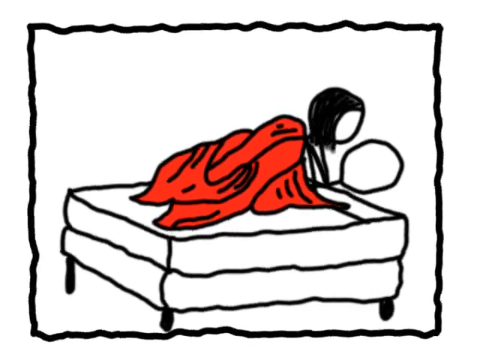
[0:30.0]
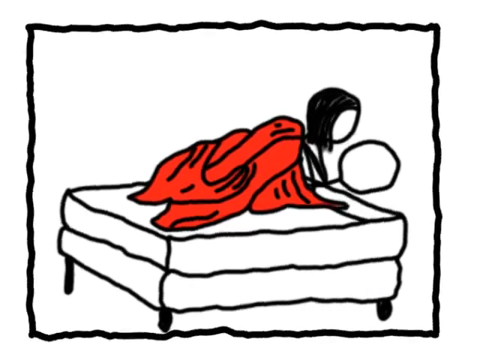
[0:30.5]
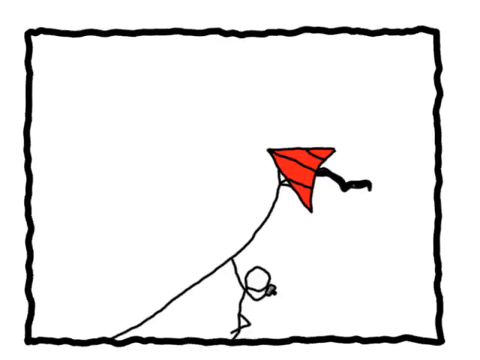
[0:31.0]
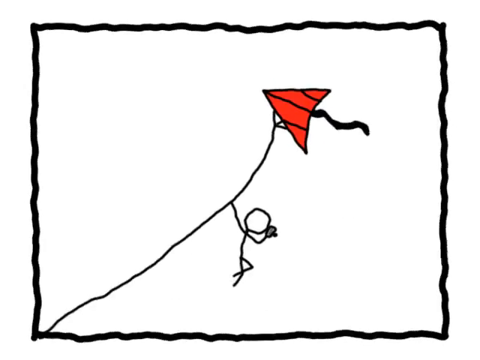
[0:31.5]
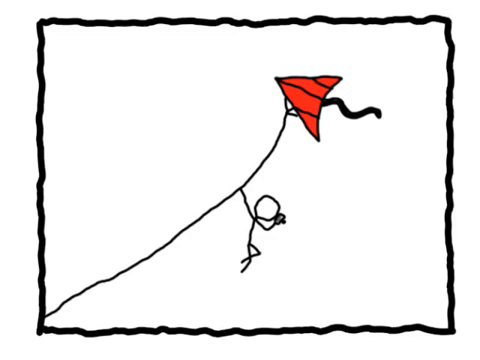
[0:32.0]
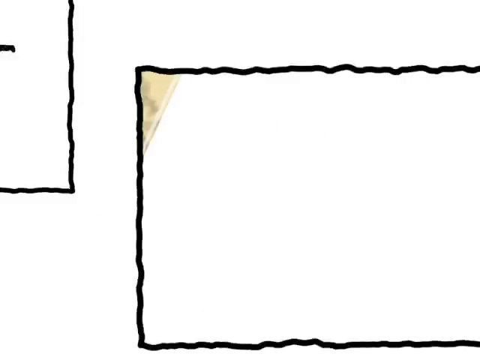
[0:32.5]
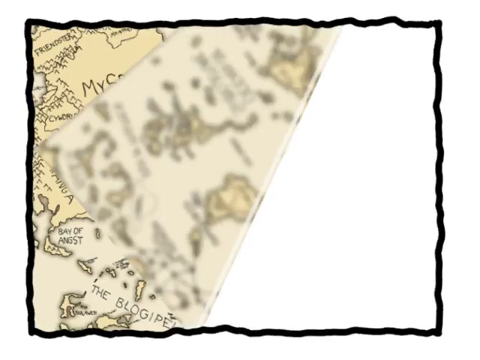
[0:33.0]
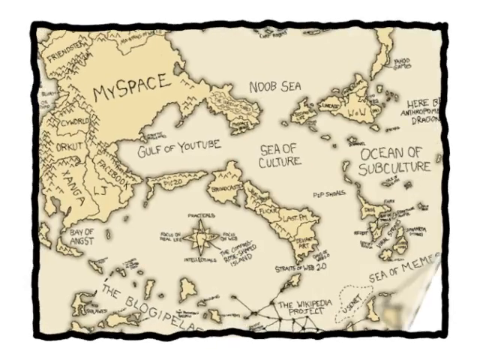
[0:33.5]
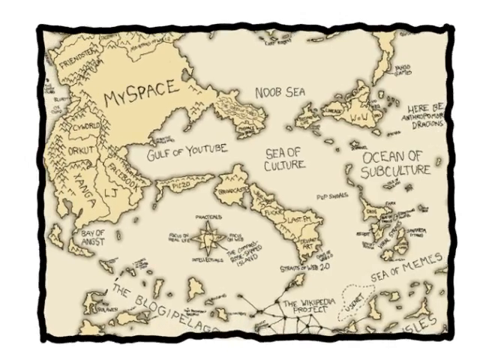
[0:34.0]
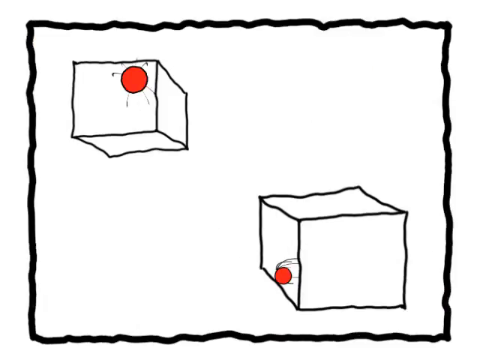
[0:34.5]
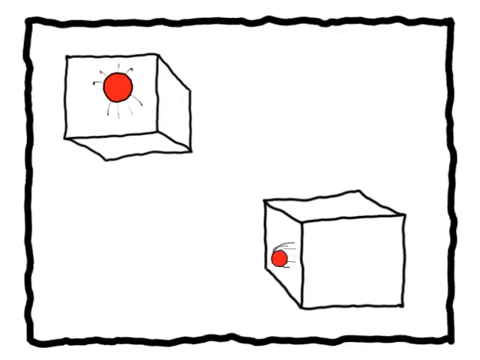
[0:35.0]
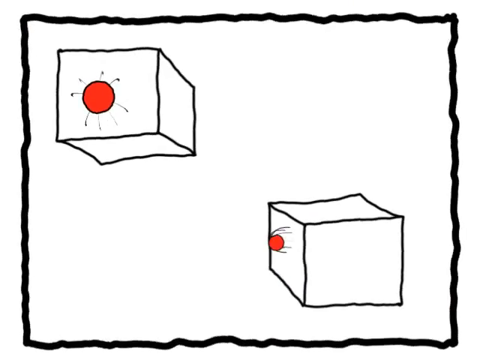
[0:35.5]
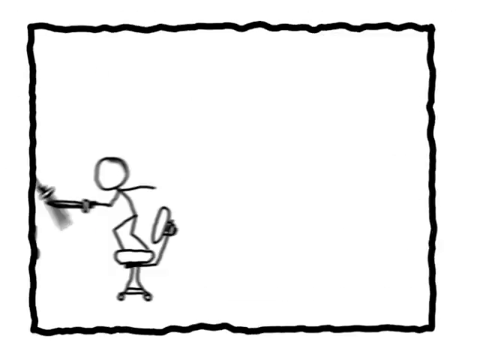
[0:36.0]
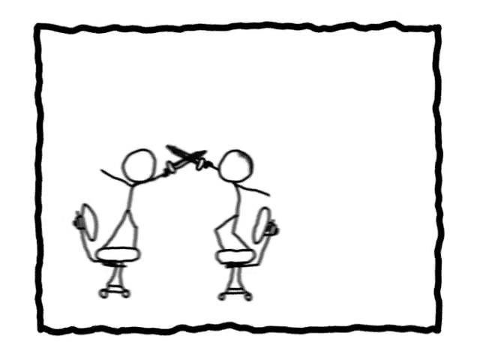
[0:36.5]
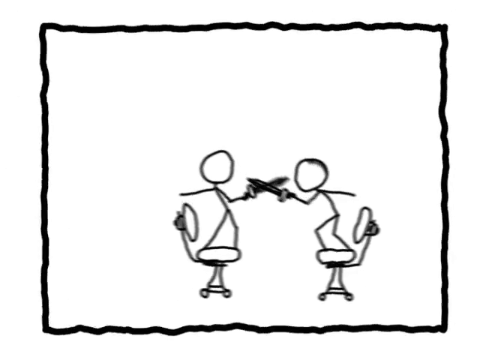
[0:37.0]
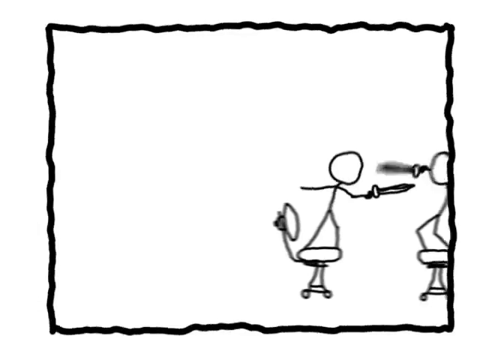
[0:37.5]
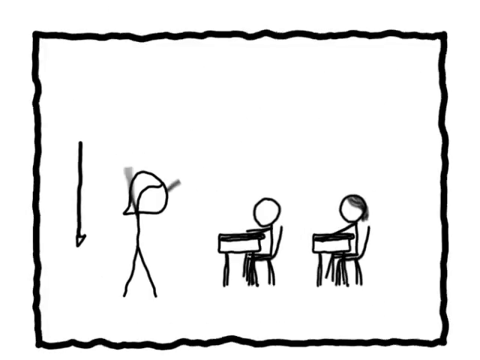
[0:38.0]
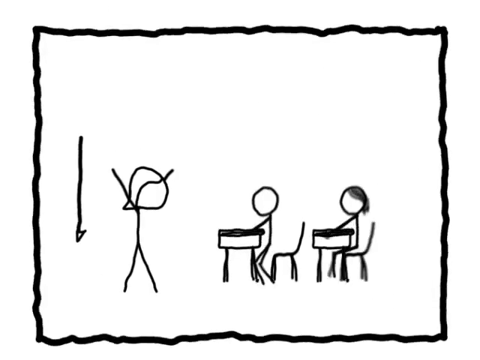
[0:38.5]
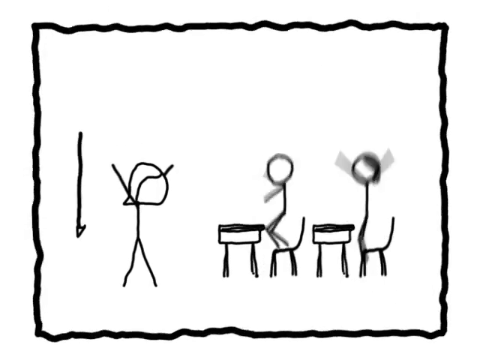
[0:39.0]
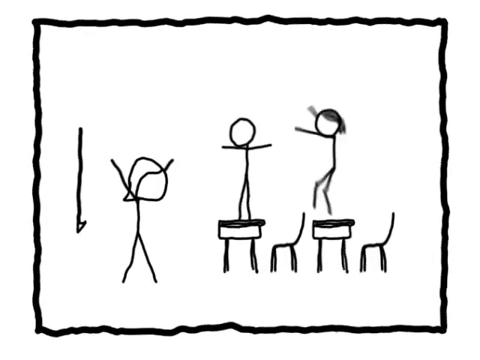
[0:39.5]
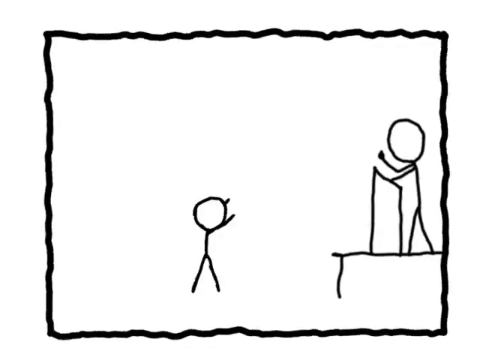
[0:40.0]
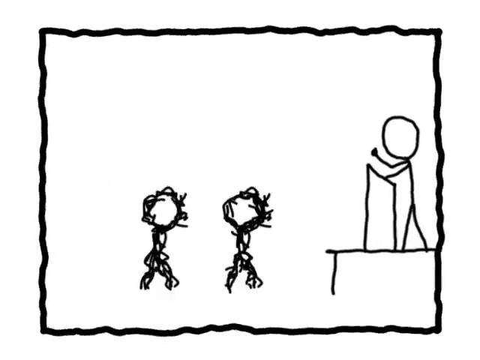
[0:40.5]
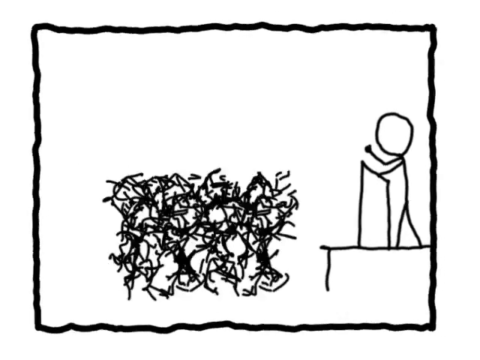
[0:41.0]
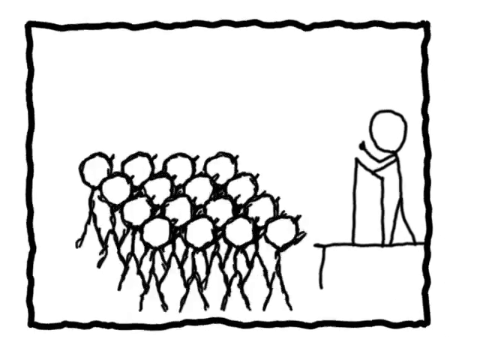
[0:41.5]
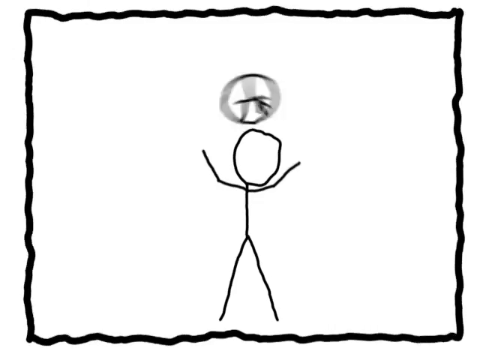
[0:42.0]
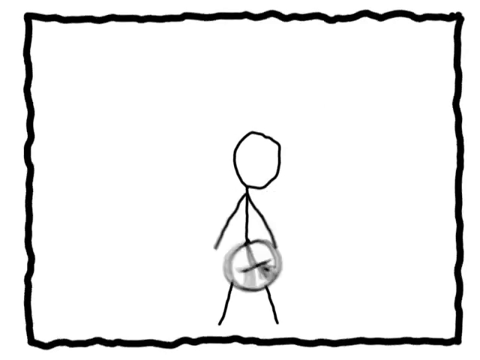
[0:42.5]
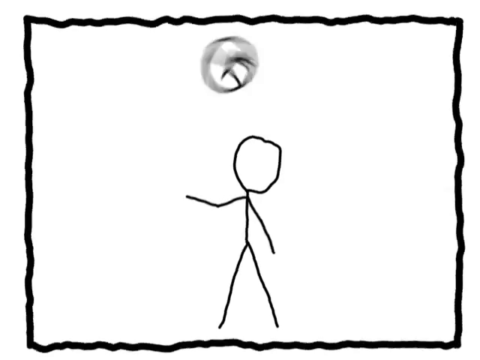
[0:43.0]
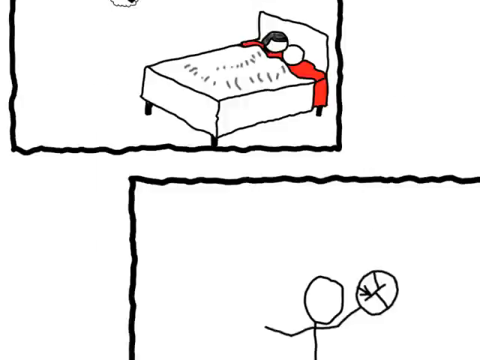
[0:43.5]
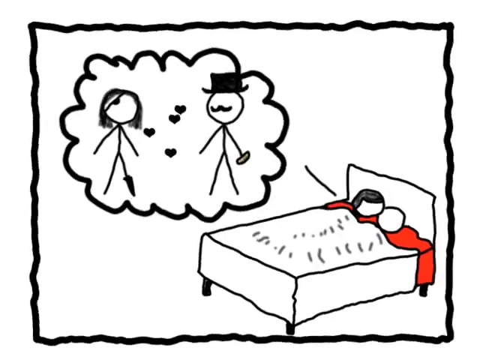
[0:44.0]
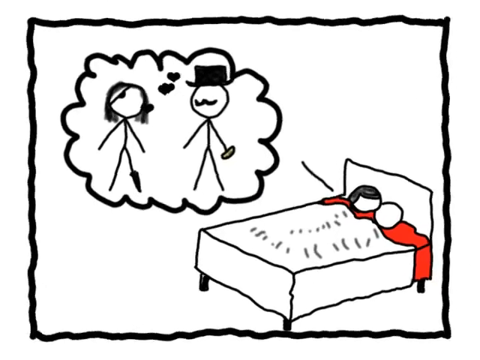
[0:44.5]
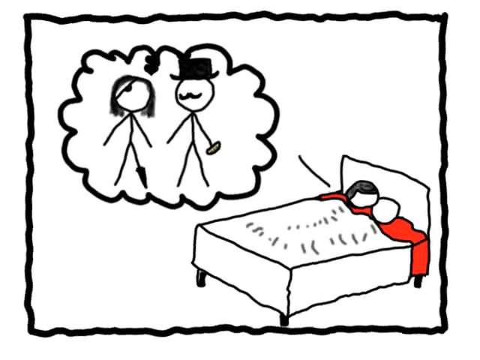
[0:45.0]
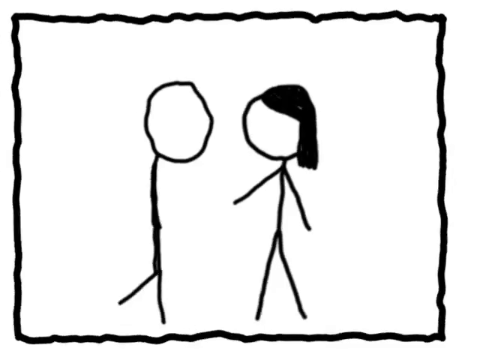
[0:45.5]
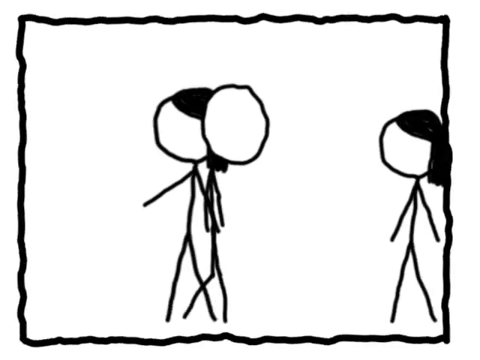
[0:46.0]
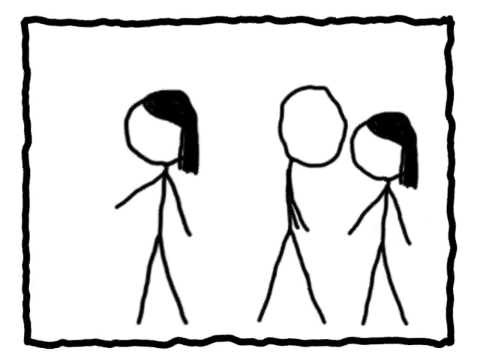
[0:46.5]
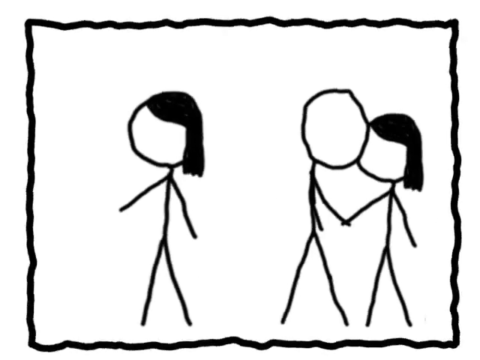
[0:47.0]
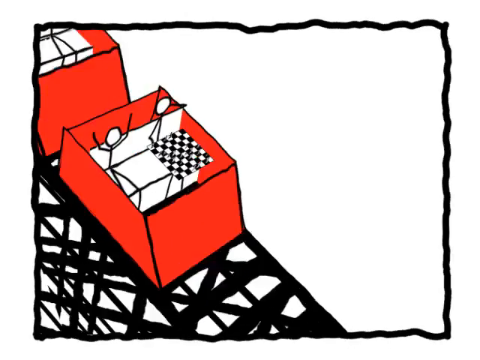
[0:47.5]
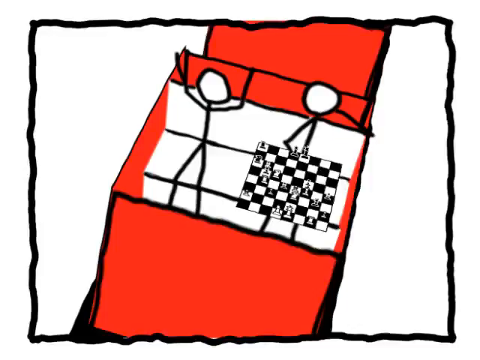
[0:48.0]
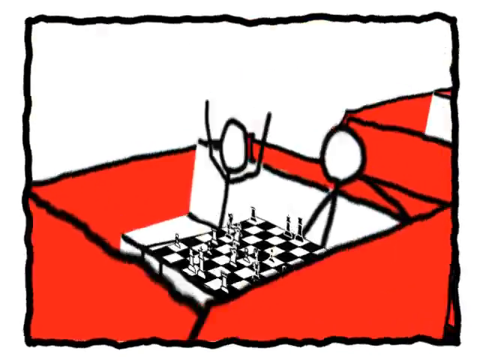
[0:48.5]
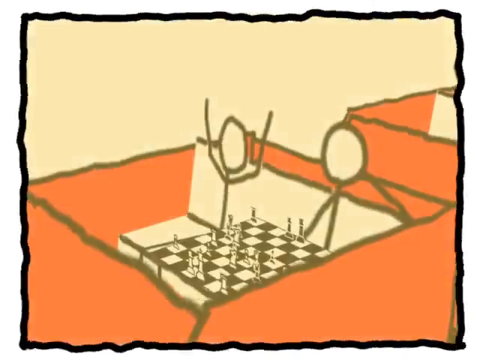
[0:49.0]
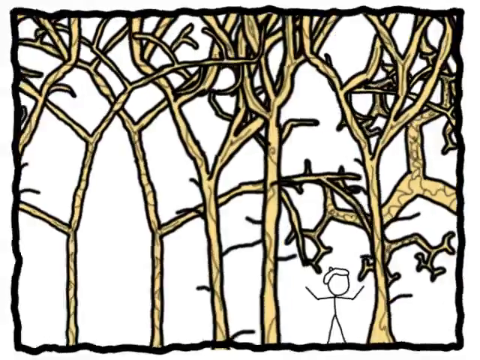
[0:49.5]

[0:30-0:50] In a different scene, a bed or sofa is shown within a drawn hazy box with a visible black border. The bed is drawn in black pen and has three visible stick legs. Two characters, one with black hair and one completely bald, are on it with a red blanket over them. The scene then changes to a kite against a completely white background. A kite string runs from the bottom left-hand corner up to the top right-hand corner of the screen. The kite is a red triangle with three black lines within it, and a tail of black squiggly lines comes from it. The bald stick man is holding on to the kite halfway up the screen. The scene then changes to a map that folds in from the left-hand side of the screen to the right until it is completely flat.